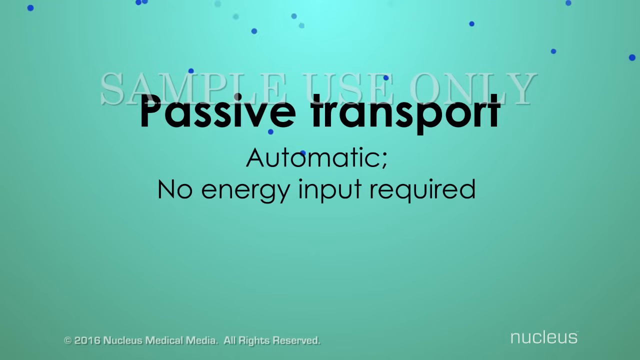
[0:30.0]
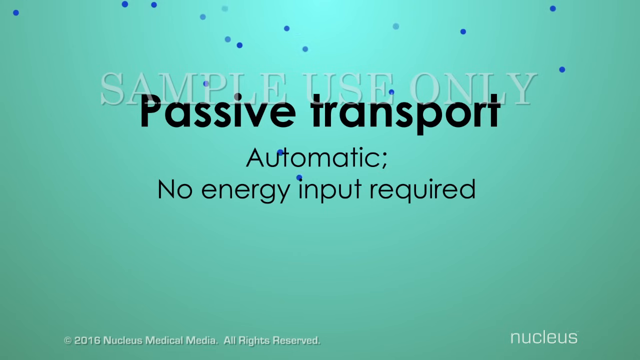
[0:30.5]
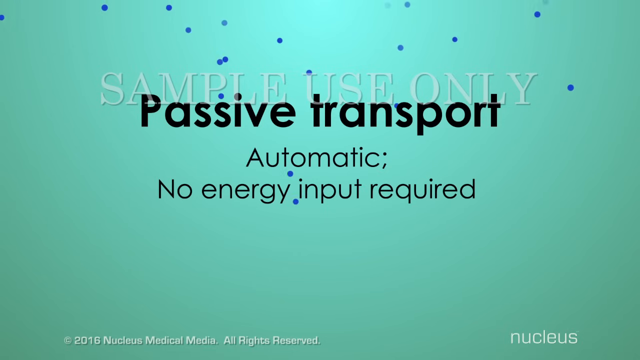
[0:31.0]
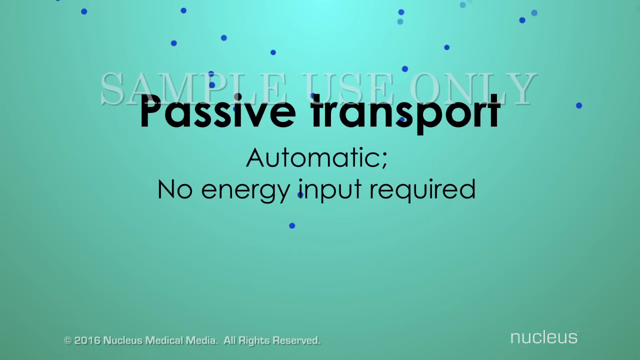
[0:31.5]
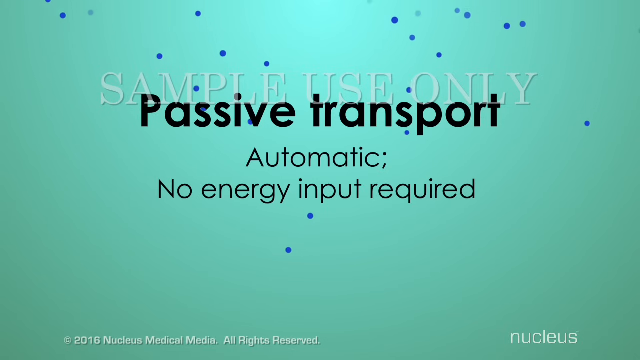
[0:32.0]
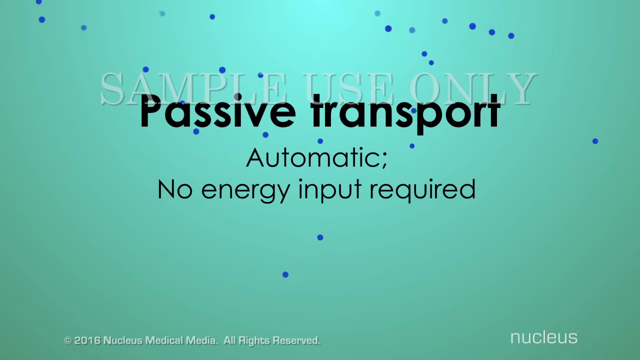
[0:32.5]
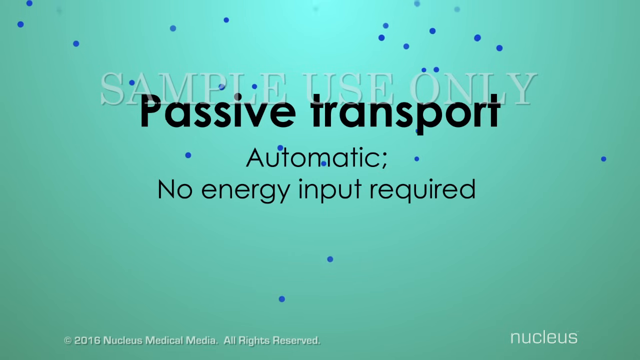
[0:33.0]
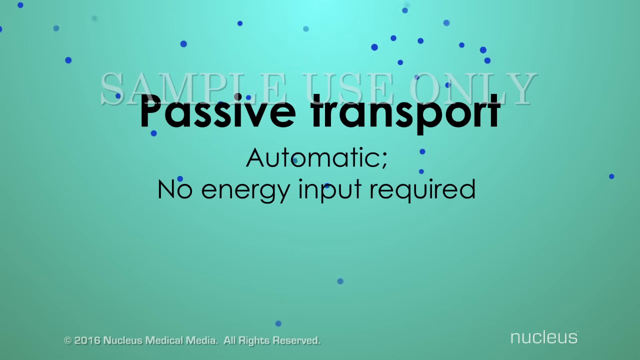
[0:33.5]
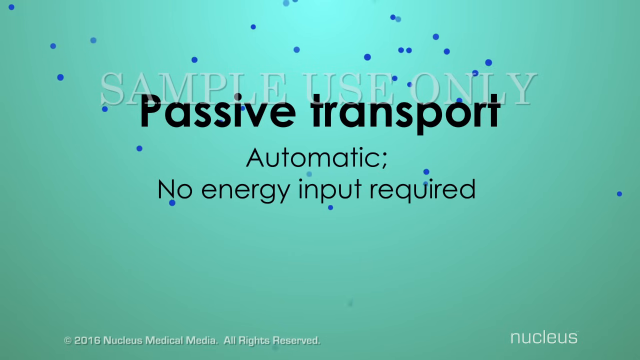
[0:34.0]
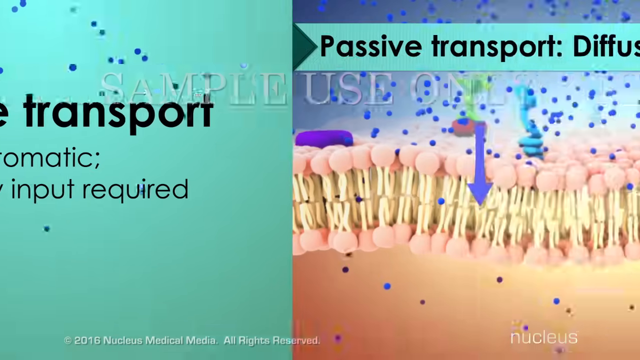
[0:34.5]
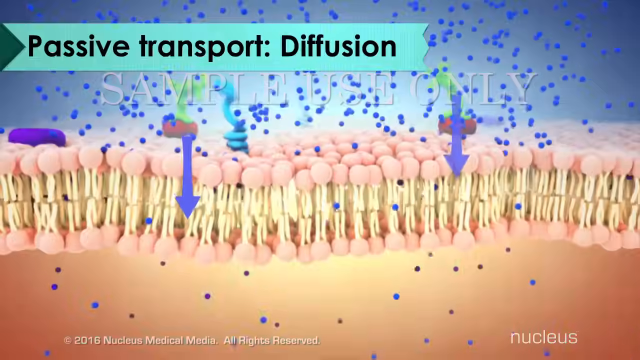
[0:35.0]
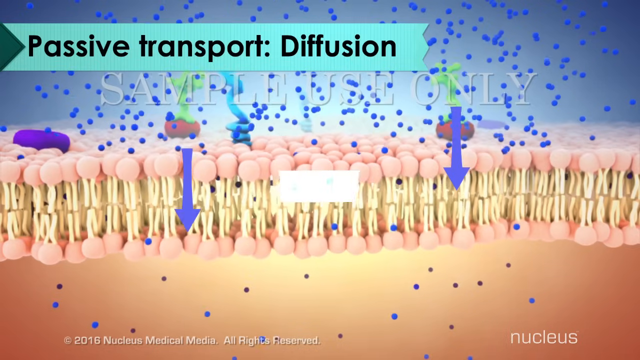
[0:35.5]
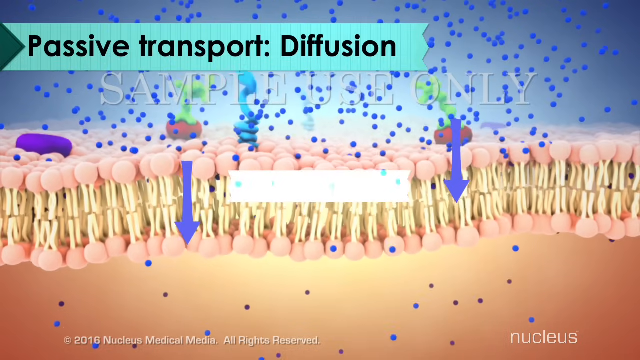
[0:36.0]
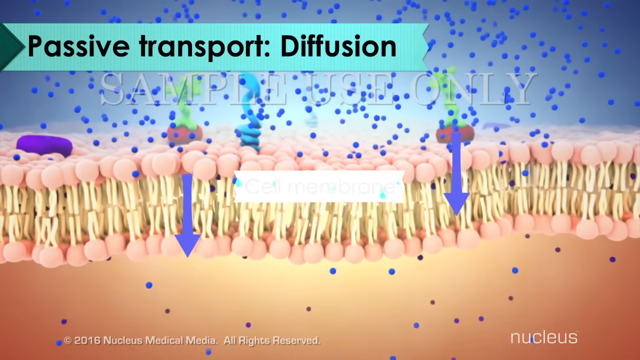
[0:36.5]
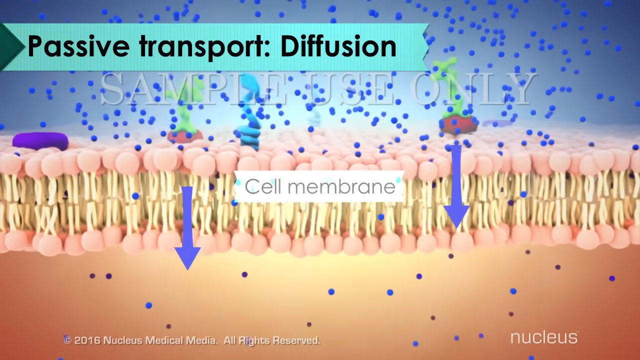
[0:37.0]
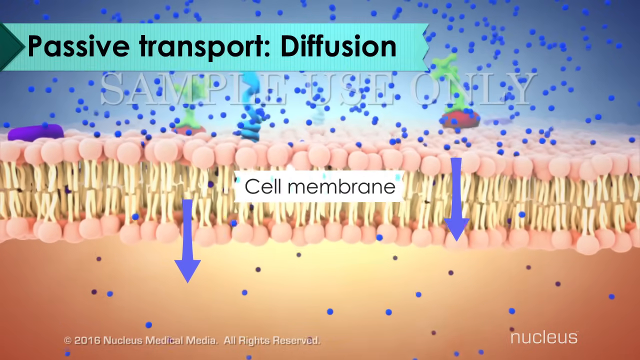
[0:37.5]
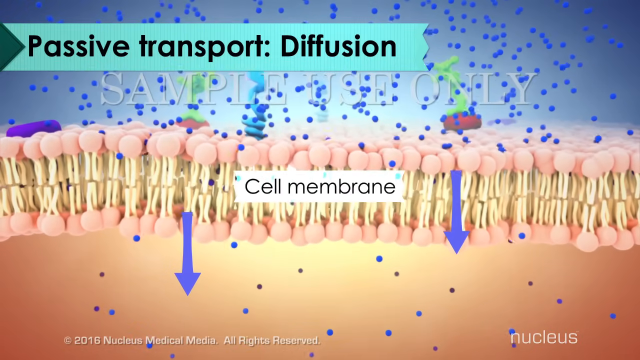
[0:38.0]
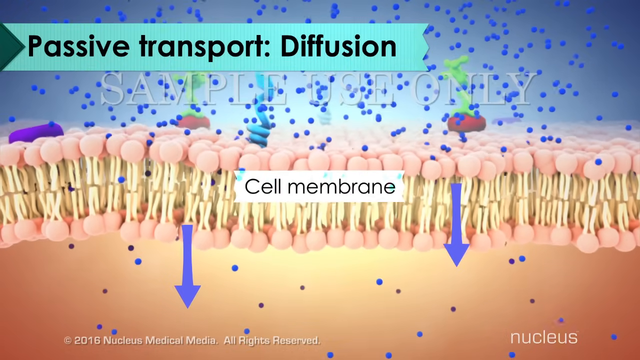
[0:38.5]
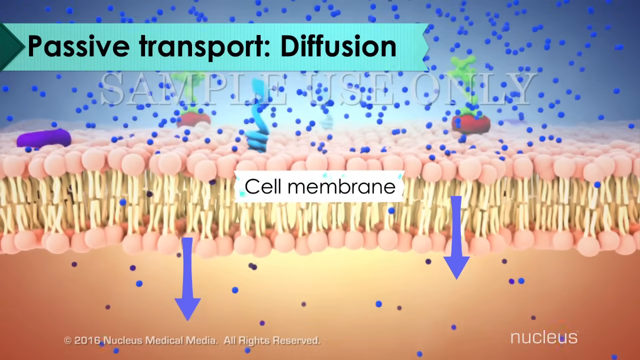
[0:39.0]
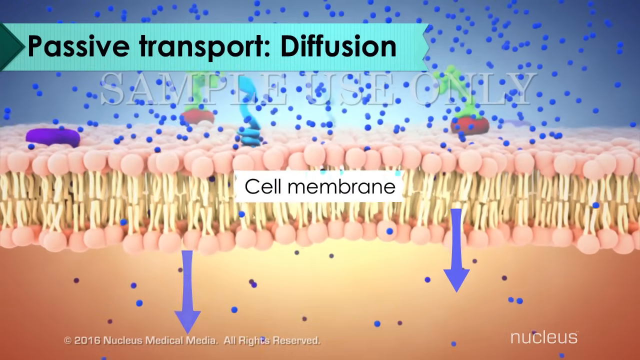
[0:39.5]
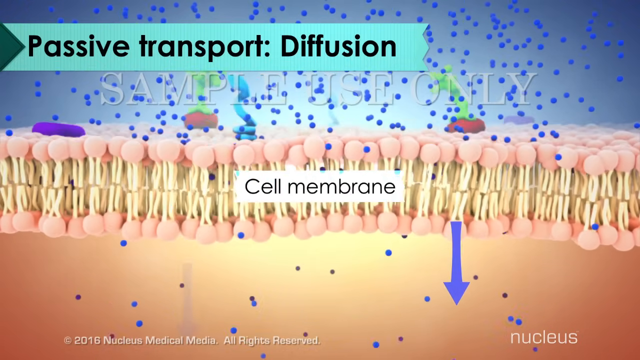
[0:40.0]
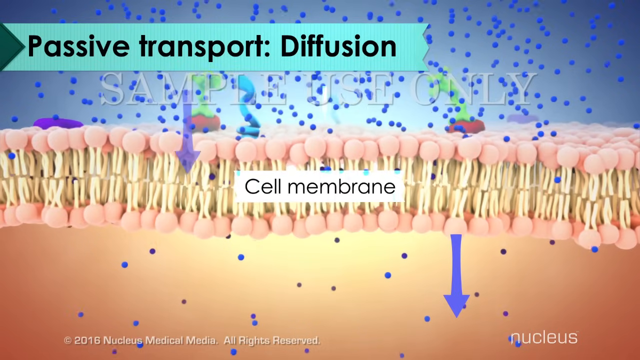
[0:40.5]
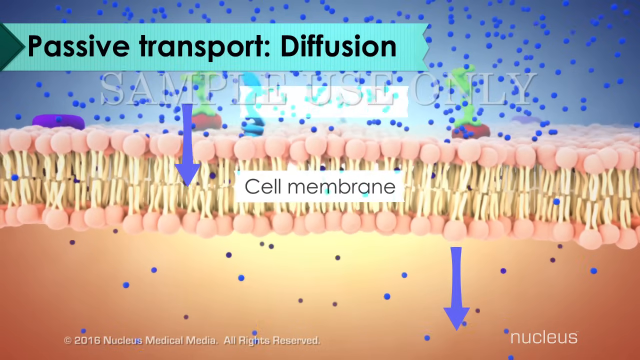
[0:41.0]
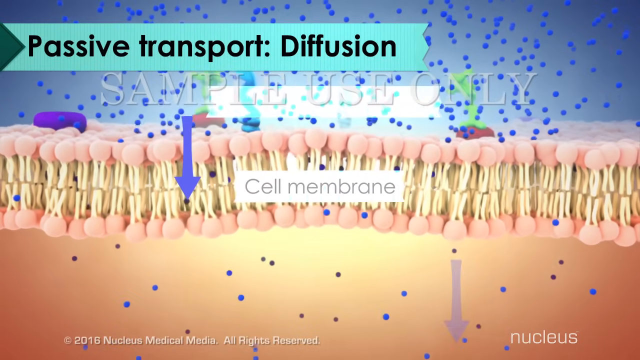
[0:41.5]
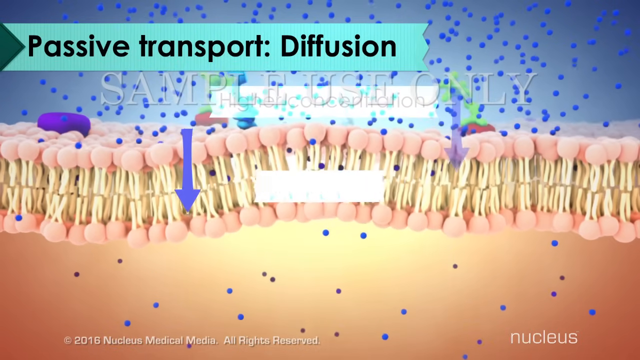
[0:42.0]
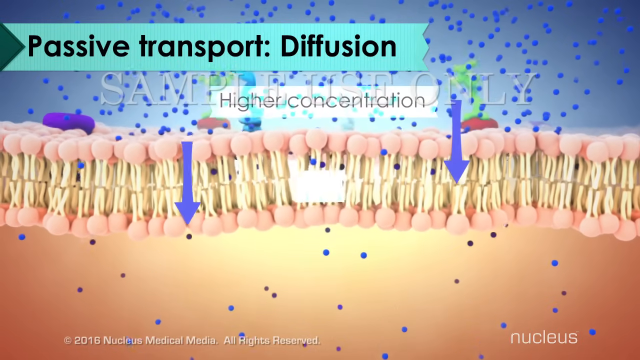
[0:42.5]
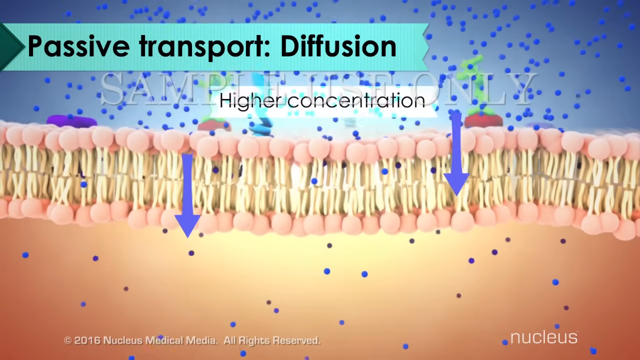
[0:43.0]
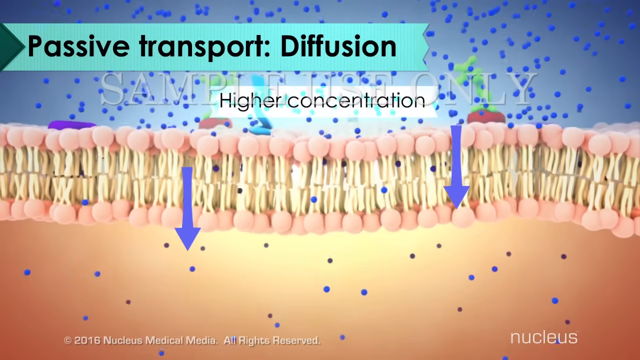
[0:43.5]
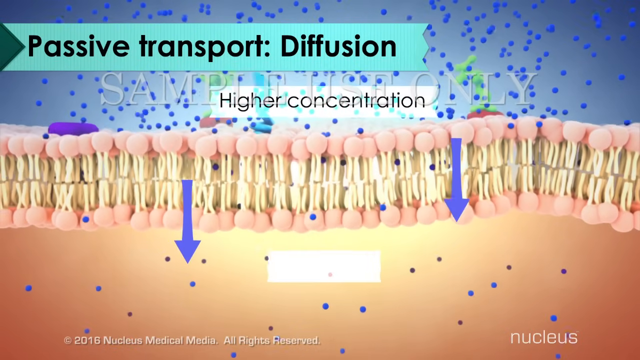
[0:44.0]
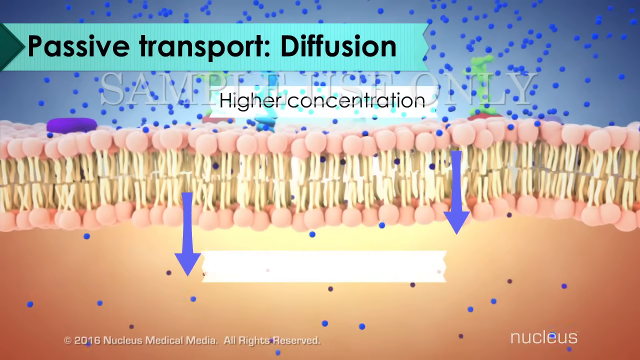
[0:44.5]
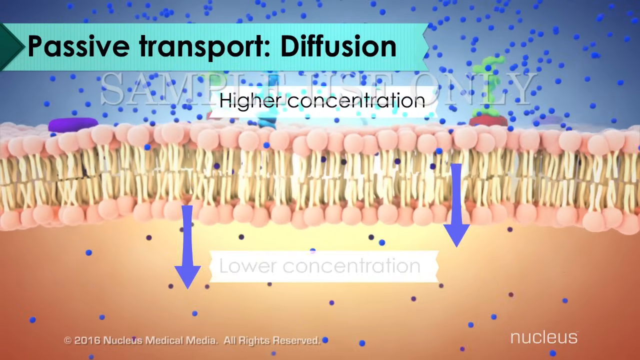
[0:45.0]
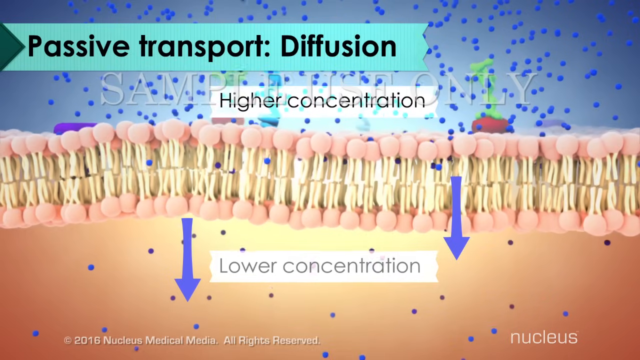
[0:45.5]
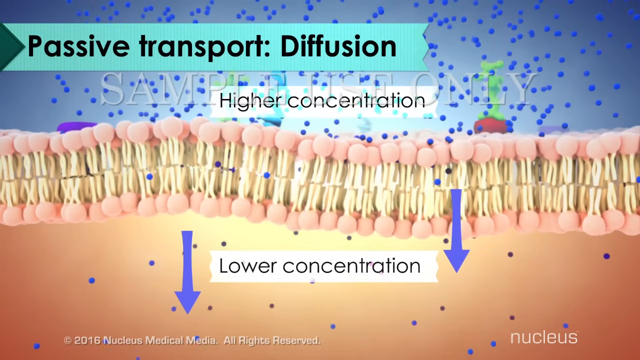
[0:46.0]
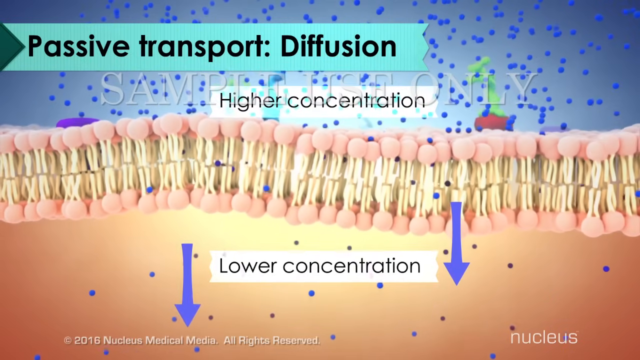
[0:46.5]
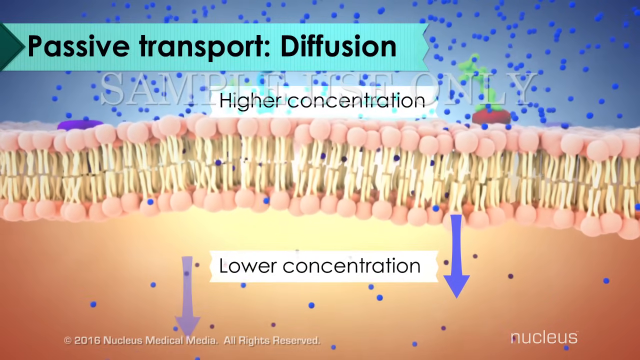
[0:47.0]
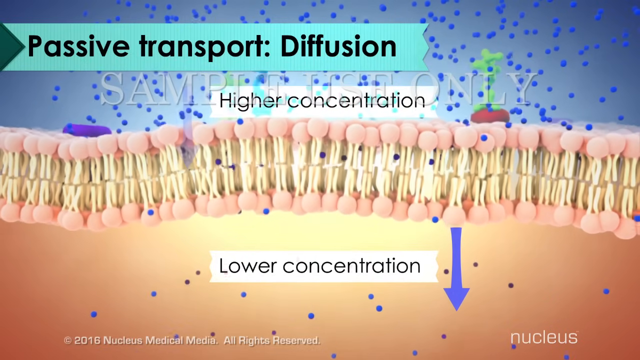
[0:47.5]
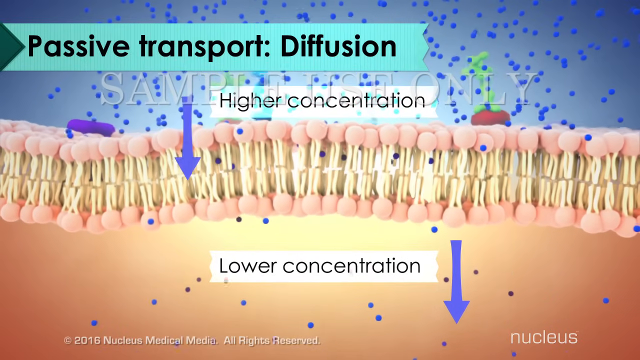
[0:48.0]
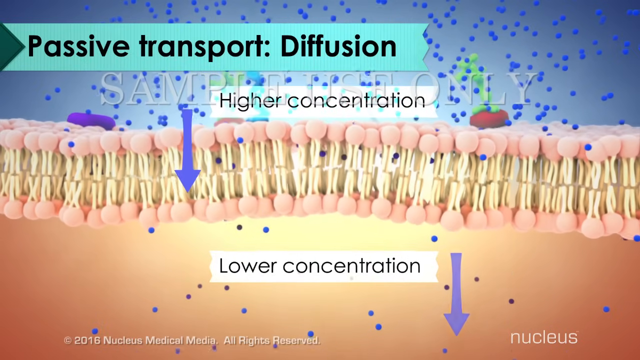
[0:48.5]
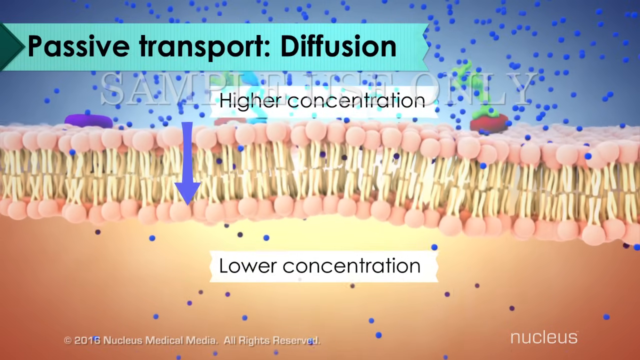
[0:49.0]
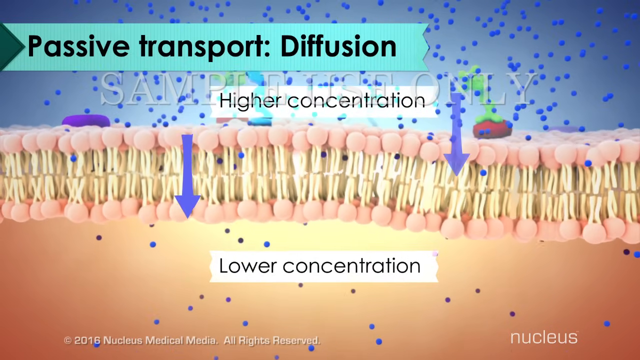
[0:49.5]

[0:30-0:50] The video shows how passive transport works, with no energy input required, and one type shown is diffusion. The scene changes to a computer-generated image of a cell membrane showing a fatty layer between the phospholipids. An animation shows how diffusion works: blue dots represent molecules, with a higher concentration outside the cell membrane, and the molecules pass through the membrane from the higher concentration outside to the lower concentration inside. Labels read "higher concentration" and "lower concentration," and there are blue downward arrows. Some active transport proteins are also included in the animation in the background.